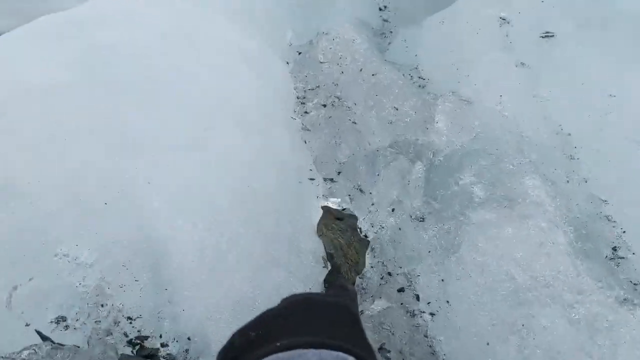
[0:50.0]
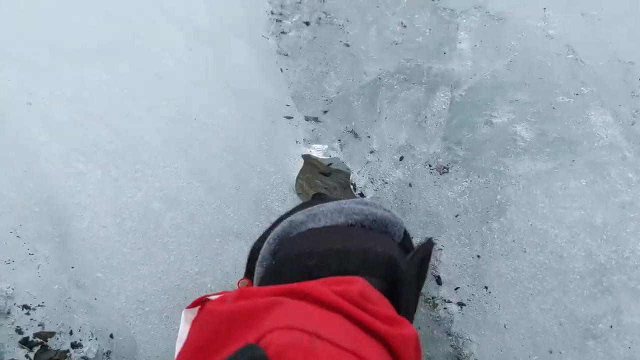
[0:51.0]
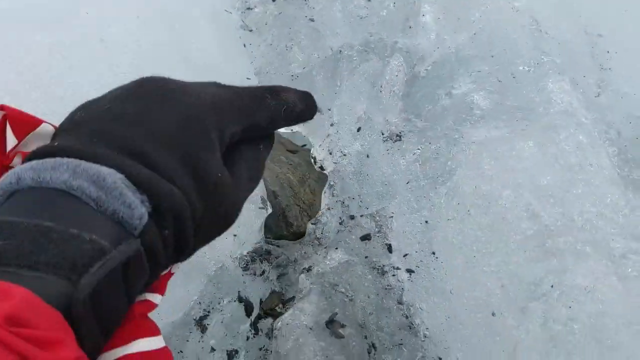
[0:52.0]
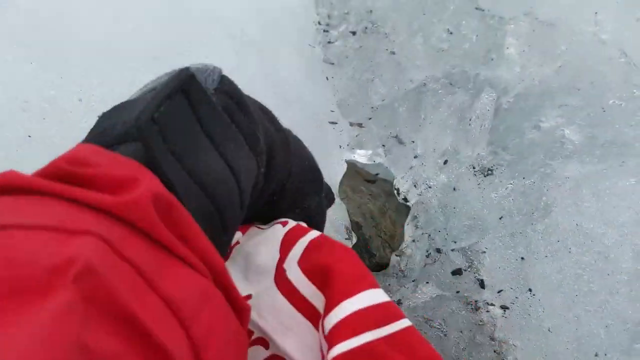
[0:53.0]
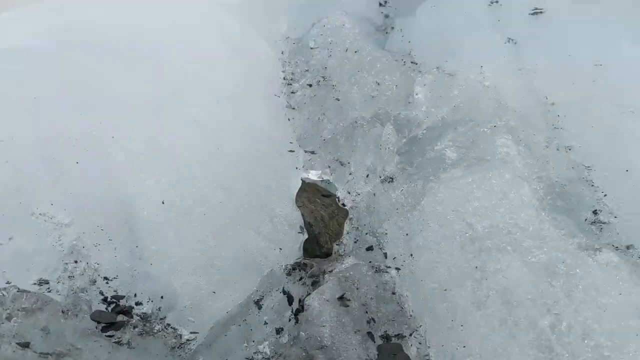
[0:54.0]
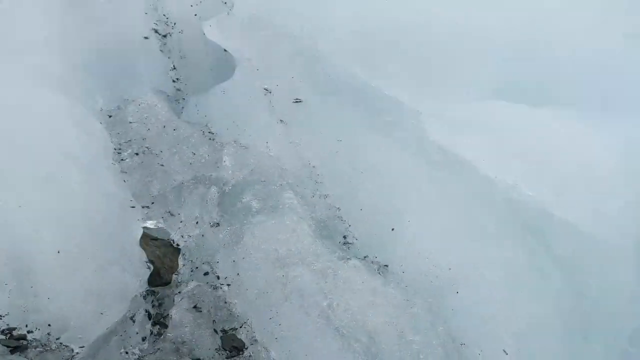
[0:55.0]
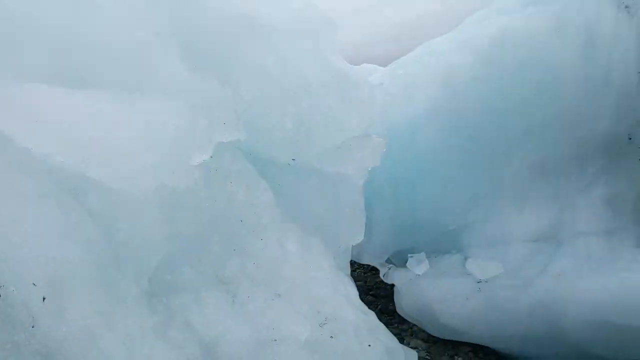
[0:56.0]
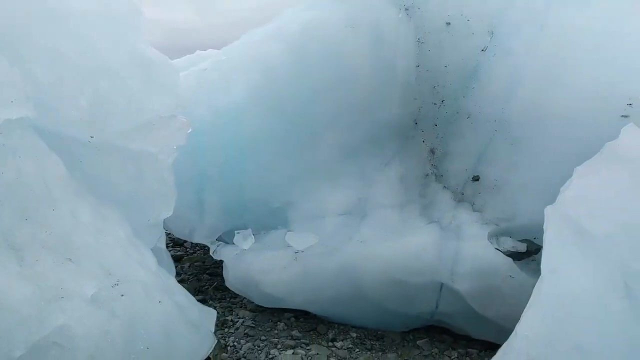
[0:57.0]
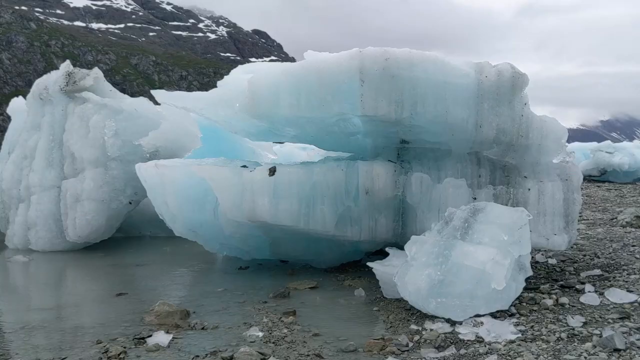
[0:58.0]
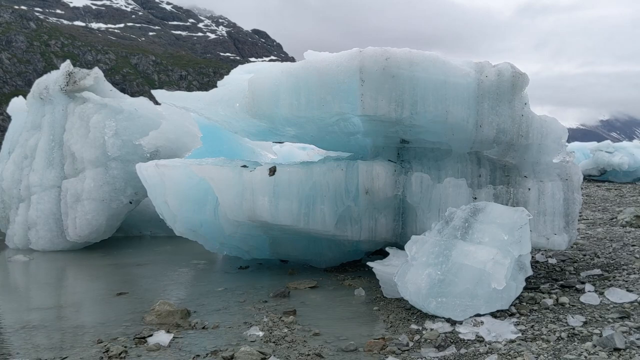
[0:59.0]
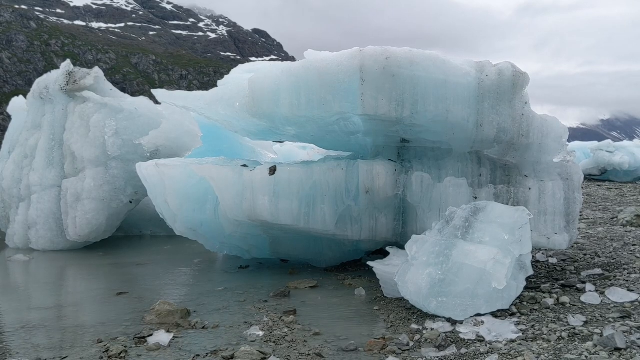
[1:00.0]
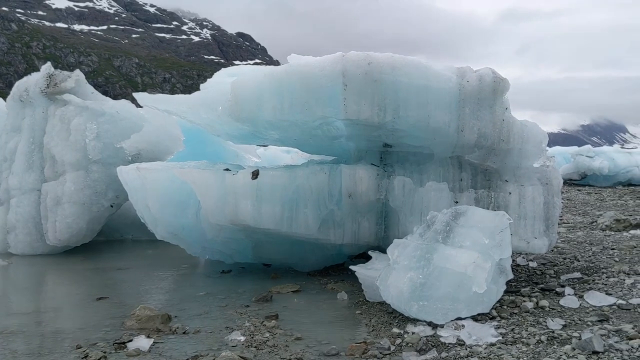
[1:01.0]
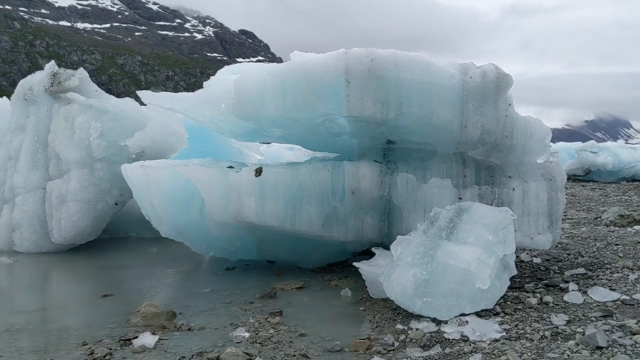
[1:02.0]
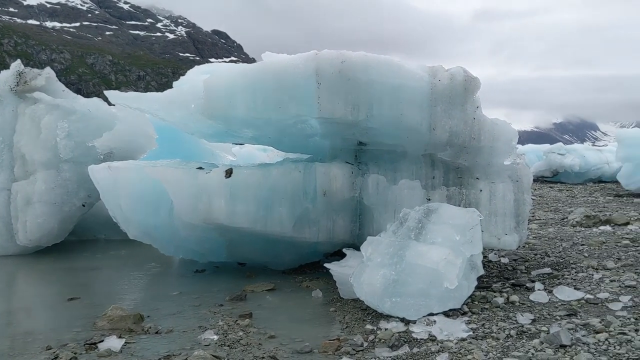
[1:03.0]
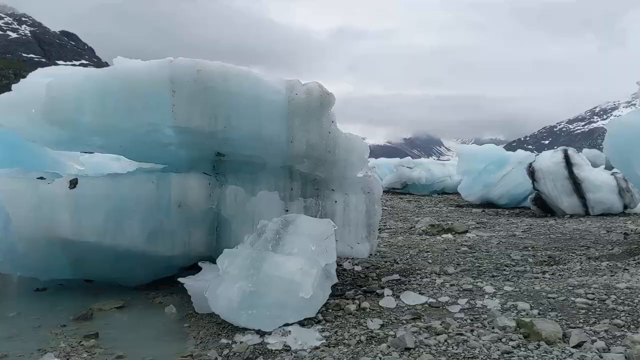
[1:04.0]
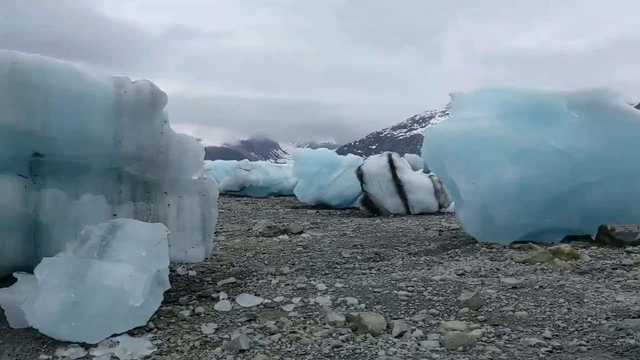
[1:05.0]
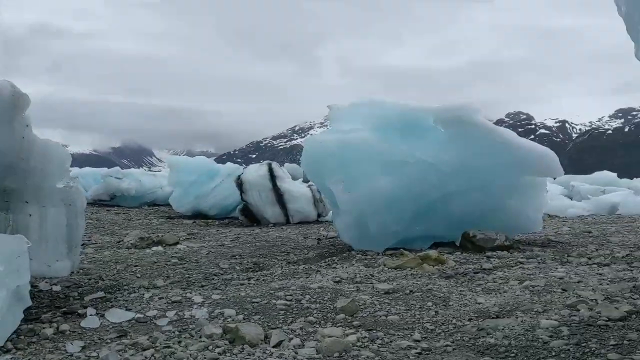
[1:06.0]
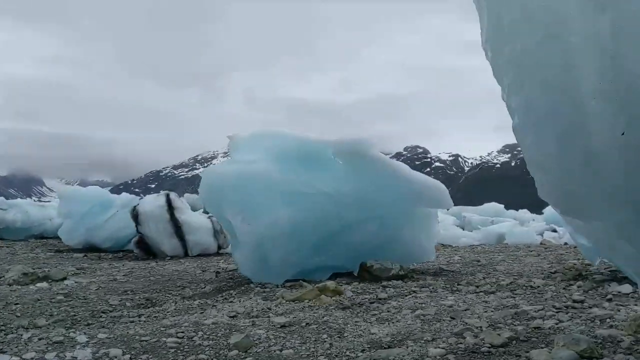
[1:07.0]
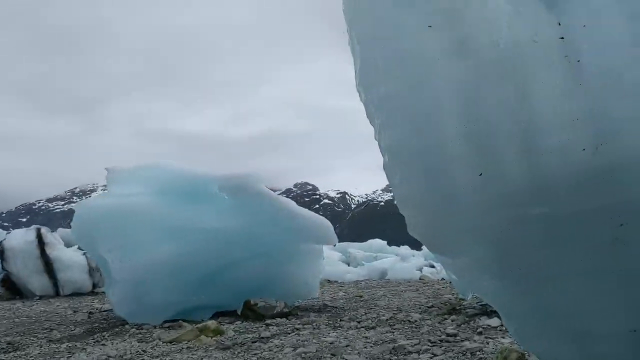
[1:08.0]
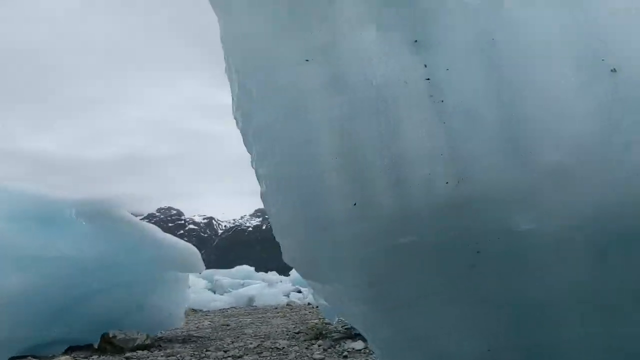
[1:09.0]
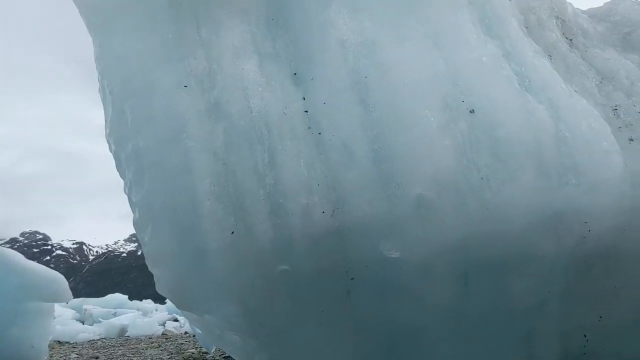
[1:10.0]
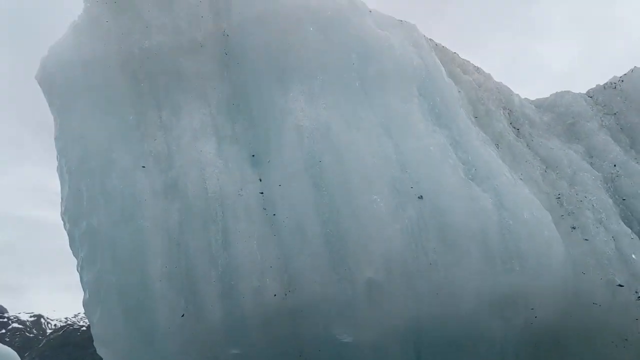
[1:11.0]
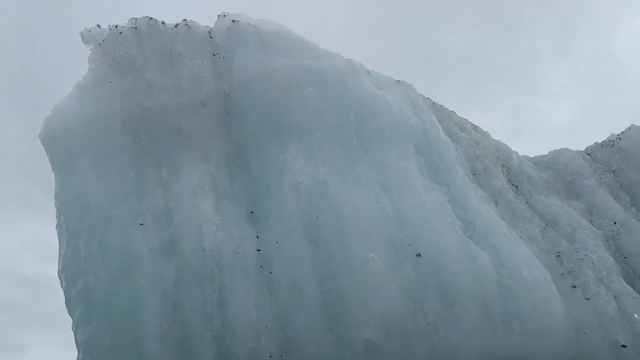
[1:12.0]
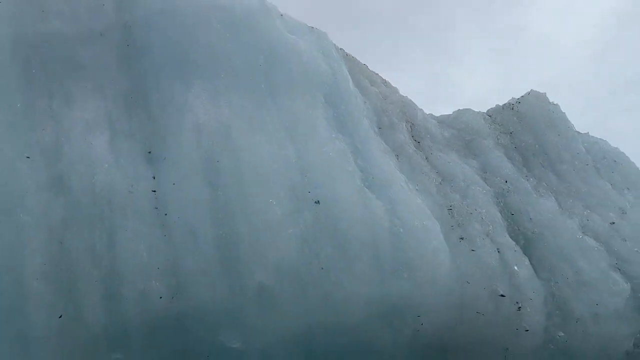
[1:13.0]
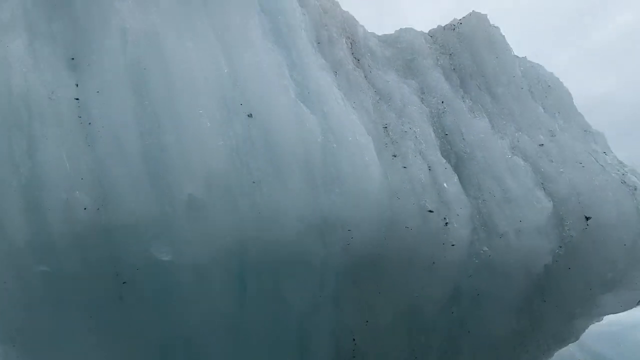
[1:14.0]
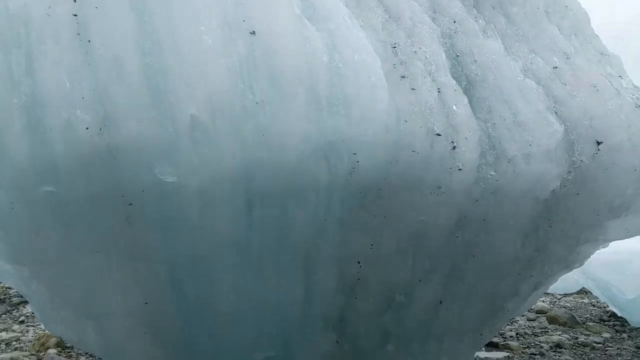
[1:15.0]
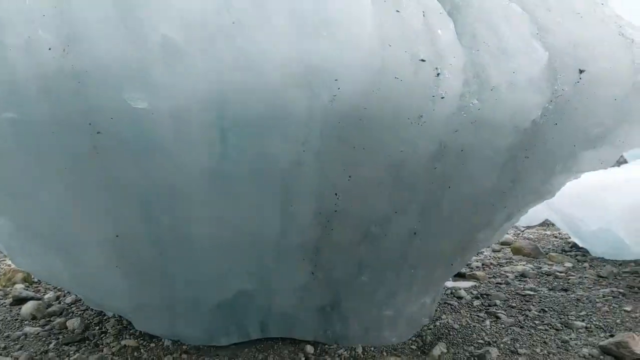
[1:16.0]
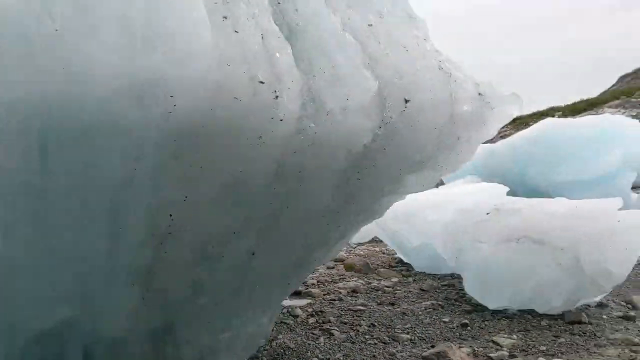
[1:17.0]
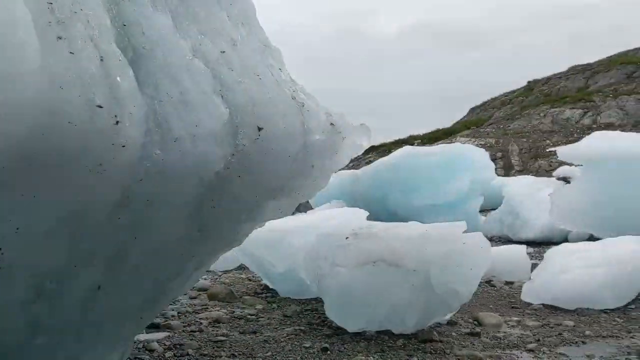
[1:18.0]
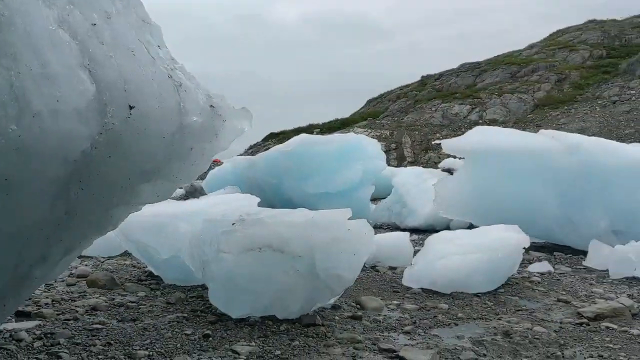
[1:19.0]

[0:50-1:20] The camera zooms in on a block of ice as a gloved finger, attached to an arm in a red padded jacket sleeve, points at a sharp little piece of rock embedded in the ice, apparently picked up by the glacier. The camera zooms back out to show a block of blue translucent ice standing, slowly melting, in a shallow muddy pool of water on a flat, bleak grey surface covered in little grey rocks, with mountains, a cliff and snow-topped mountains in the background. The camera pans to the right, revealing isolated jagged ice blocks on the edge of the glacier sitting on this flat, bleak surface, presumably slowly melting, and keeps panning right along these blocks.